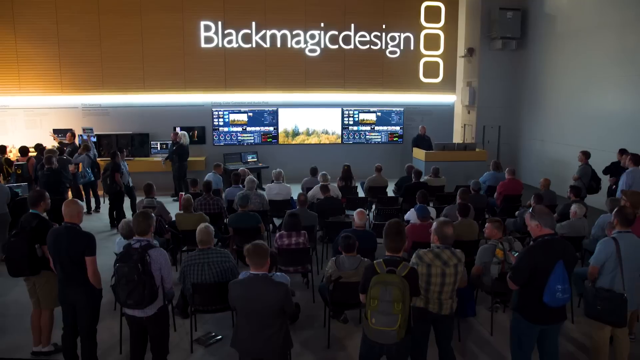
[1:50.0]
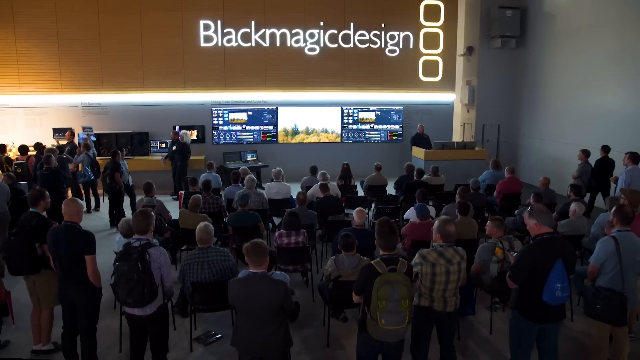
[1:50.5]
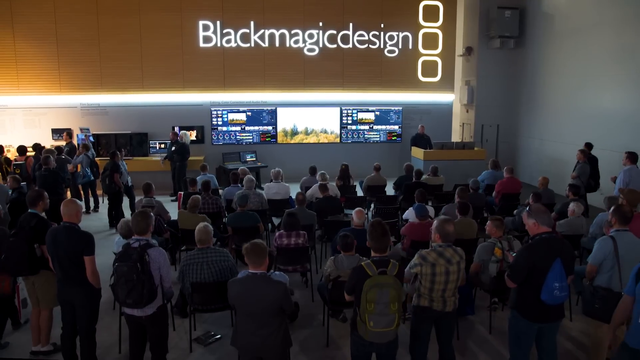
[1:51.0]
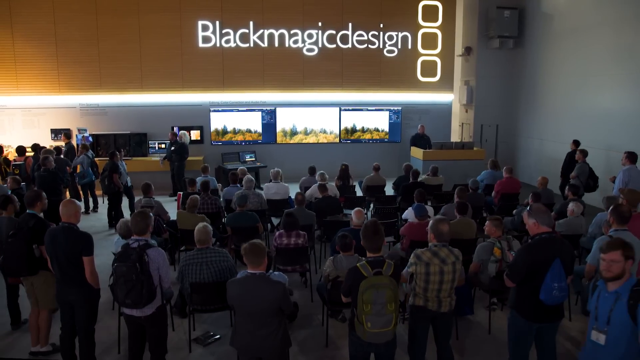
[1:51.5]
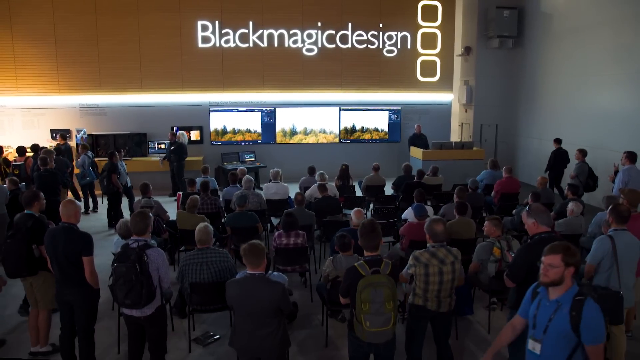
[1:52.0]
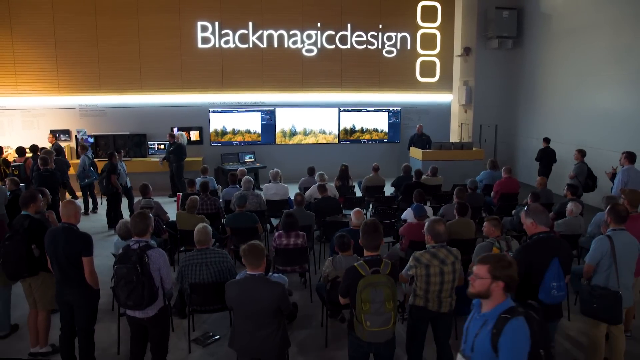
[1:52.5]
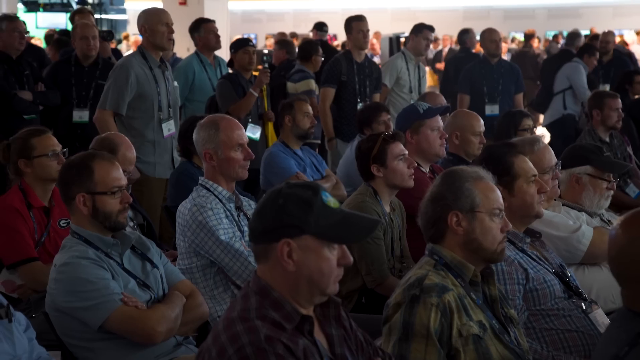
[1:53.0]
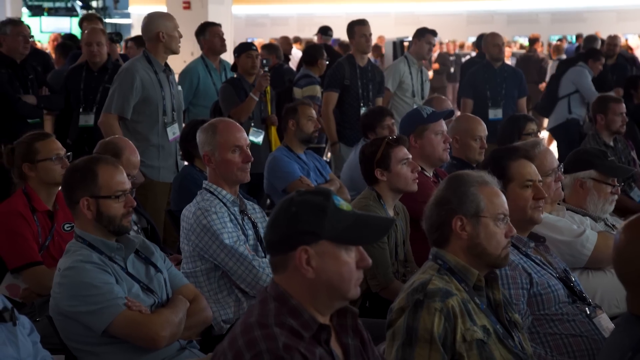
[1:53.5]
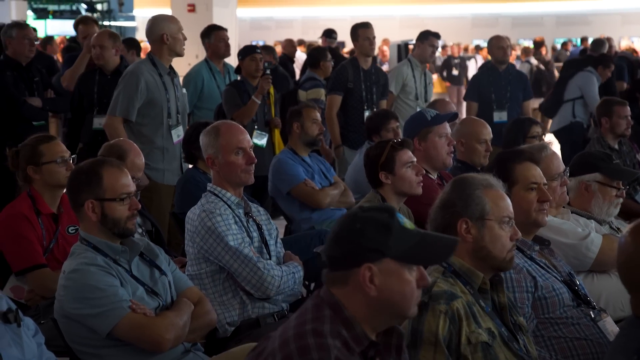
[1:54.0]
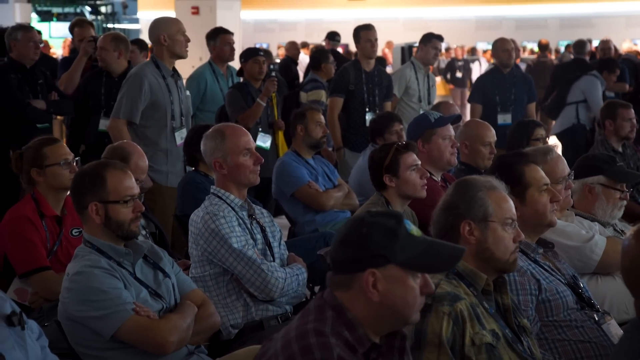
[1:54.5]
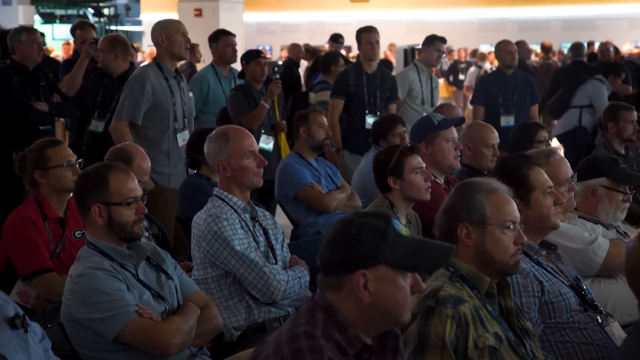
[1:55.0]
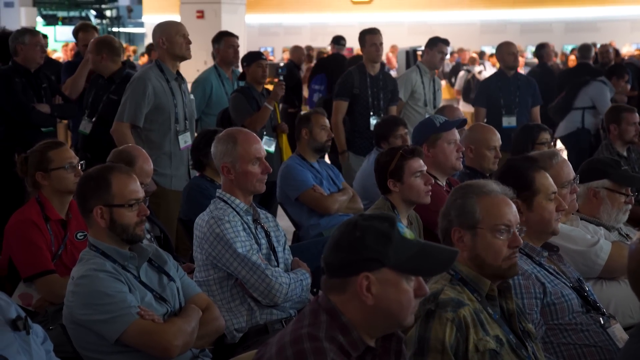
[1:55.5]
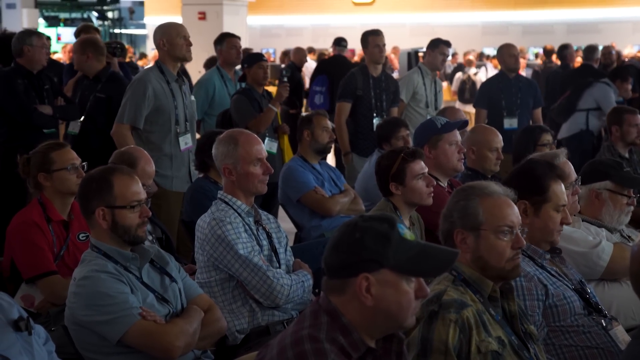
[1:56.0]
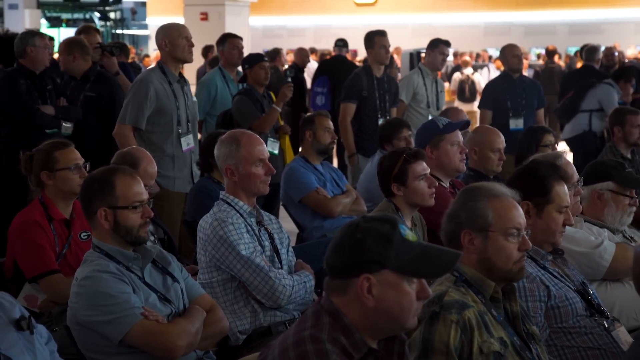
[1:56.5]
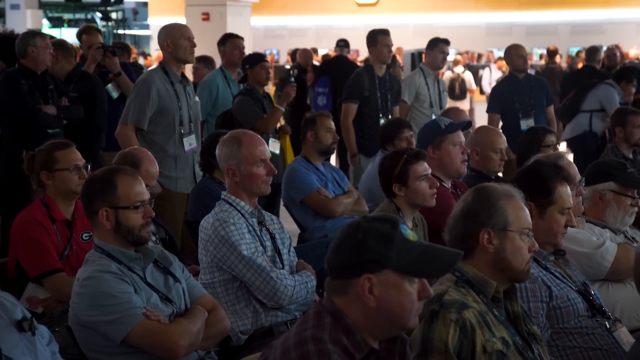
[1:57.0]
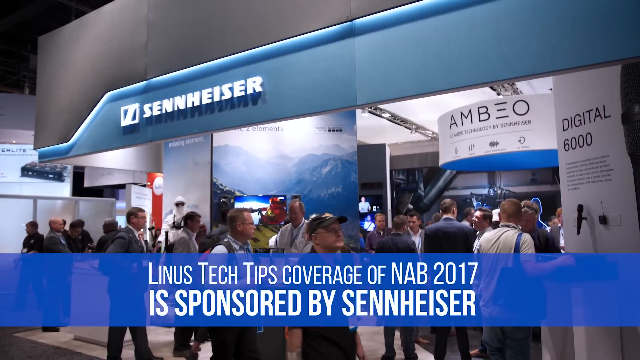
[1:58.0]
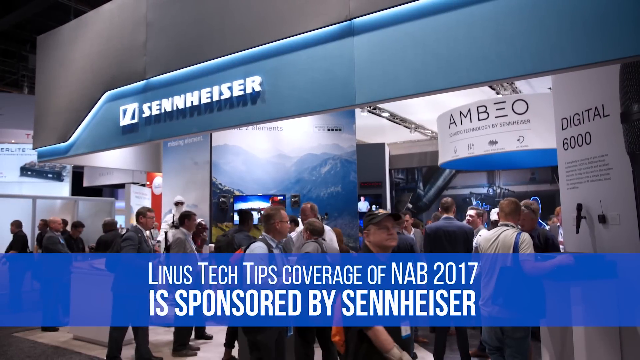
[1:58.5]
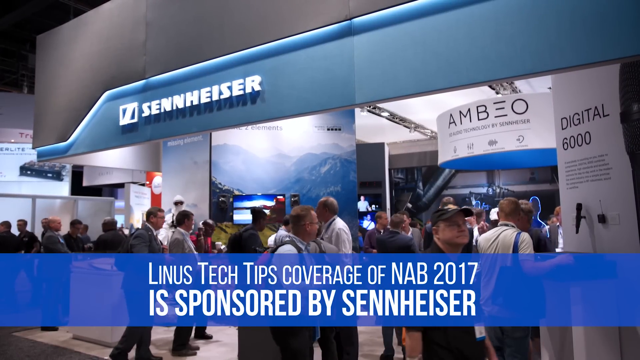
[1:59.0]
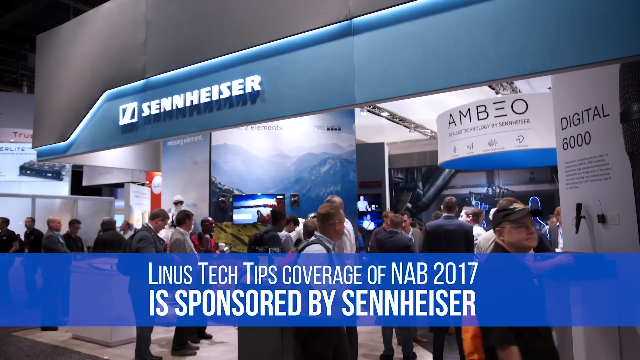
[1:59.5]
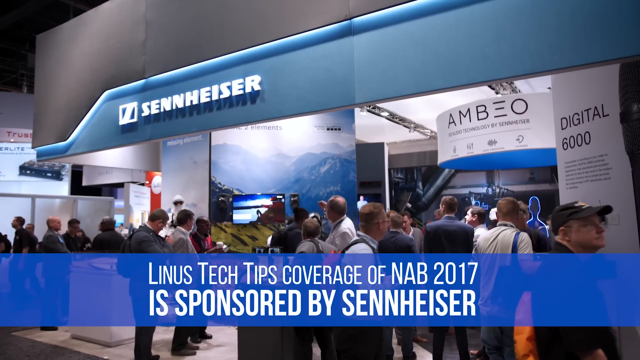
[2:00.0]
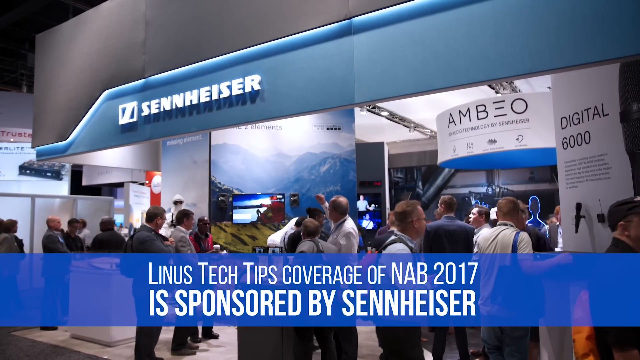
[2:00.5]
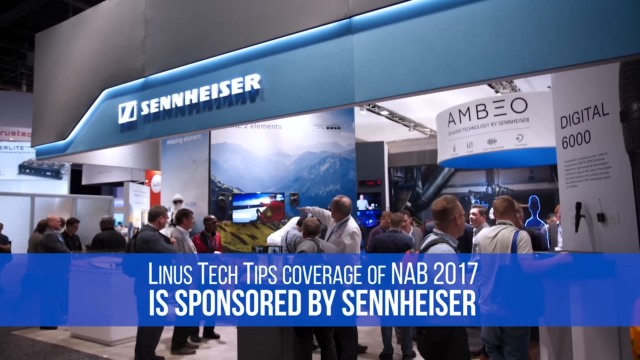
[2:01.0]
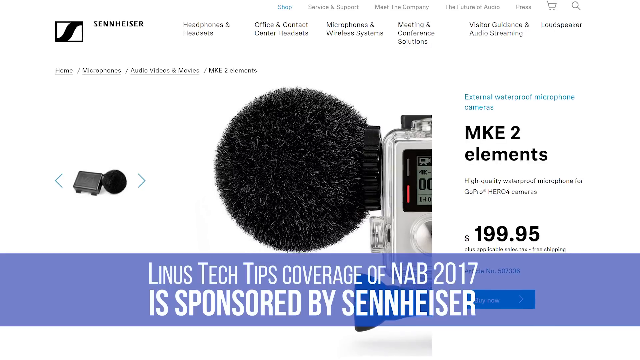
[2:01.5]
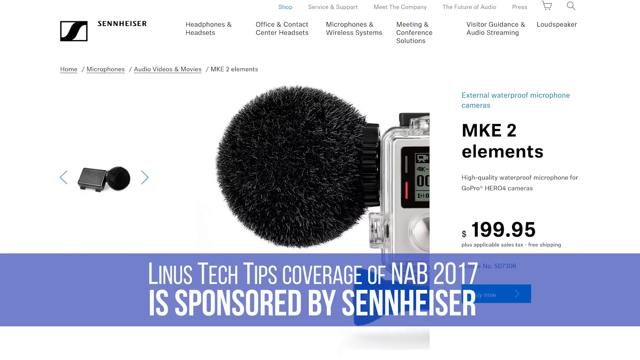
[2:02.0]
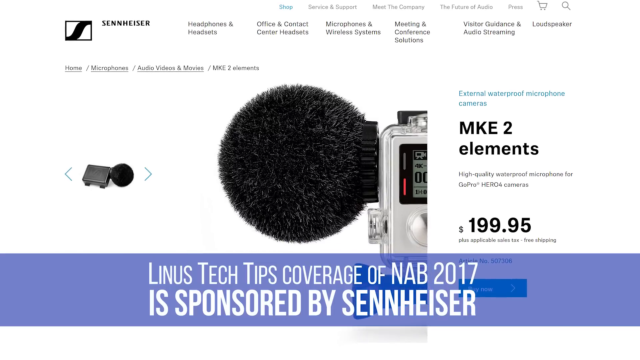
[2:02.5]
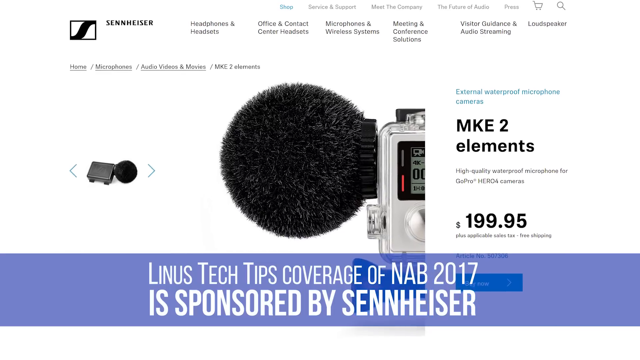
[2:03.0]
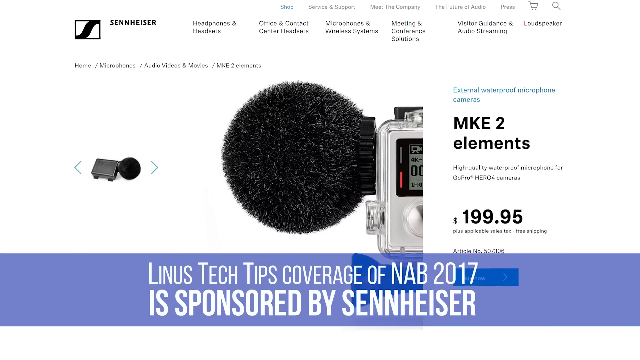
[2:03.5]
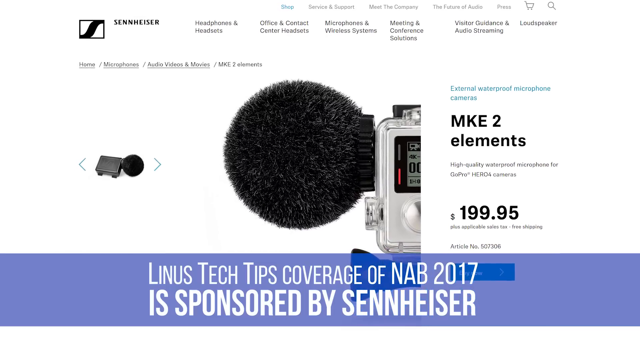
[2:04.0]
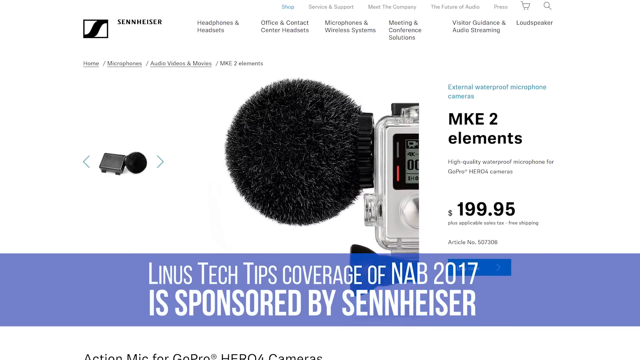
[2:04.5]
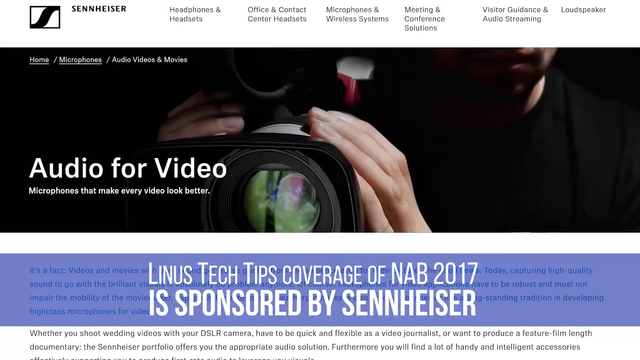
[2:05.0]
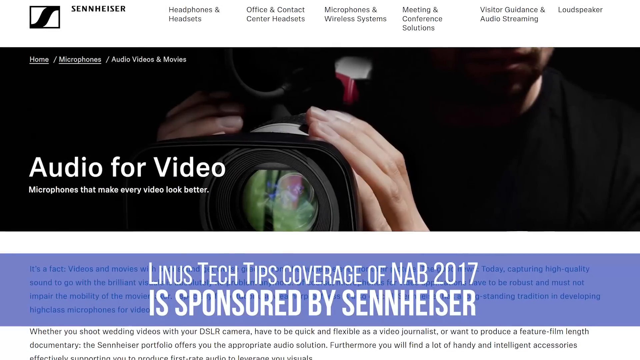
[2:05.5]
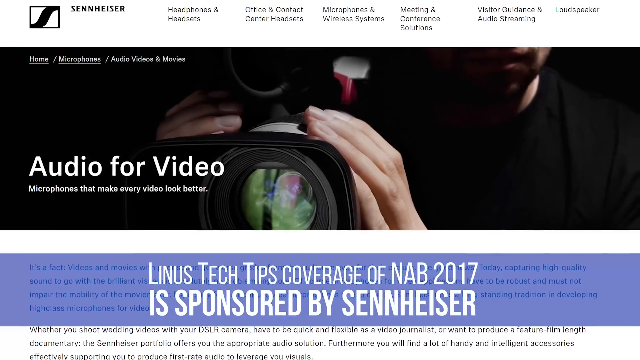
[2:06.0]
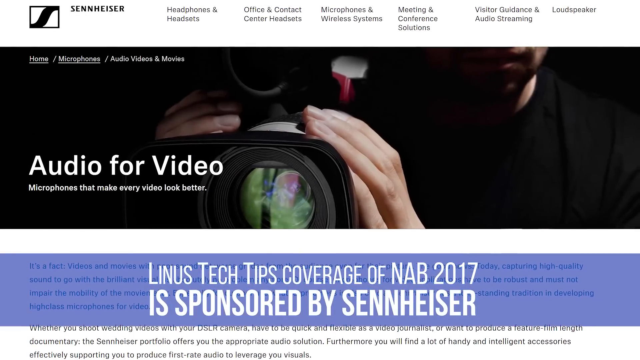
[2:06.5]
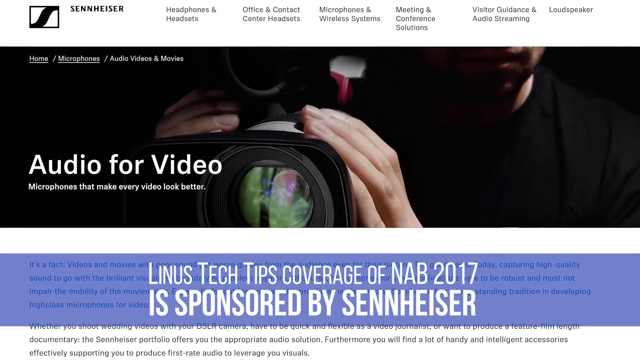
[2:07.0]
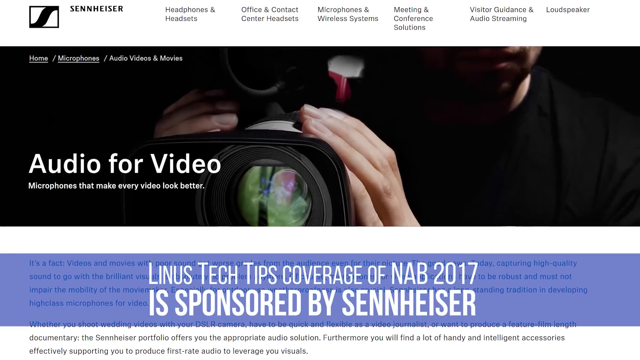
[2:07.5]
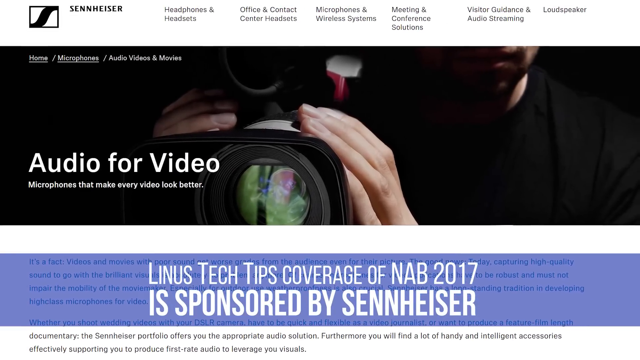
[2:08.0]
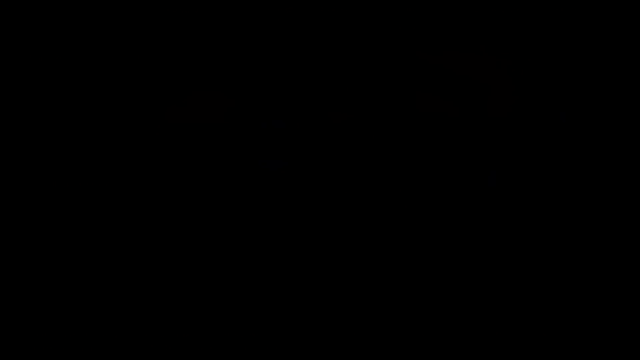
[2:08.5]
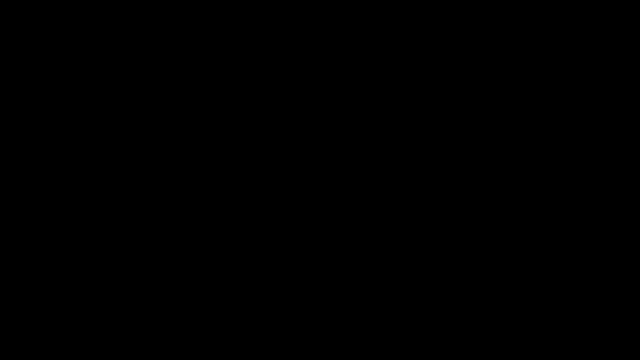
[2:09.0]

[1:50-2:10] People seem to have sat down with something in front of them, though some are standing rather than sitting. Toward the end, the video shows what it was about: Linus Tech Tips coverage from 2017. There is also information about Black Magic Designs, possibly as a sponsor.